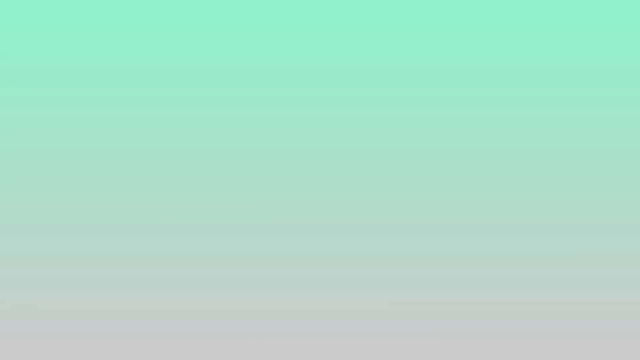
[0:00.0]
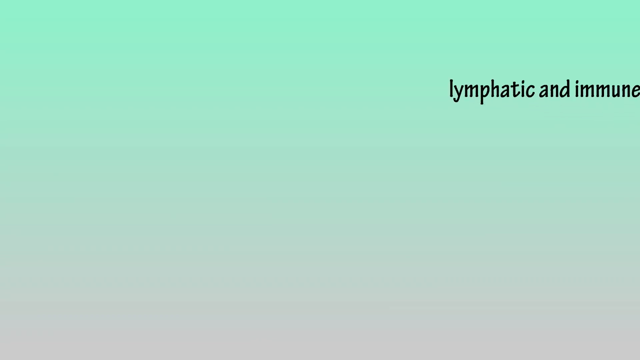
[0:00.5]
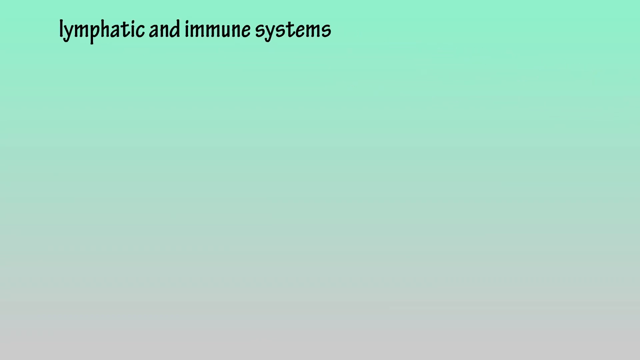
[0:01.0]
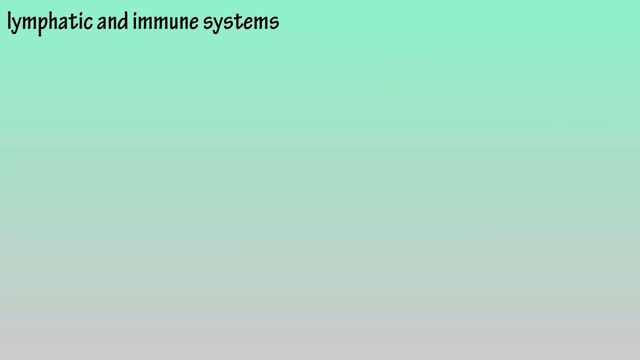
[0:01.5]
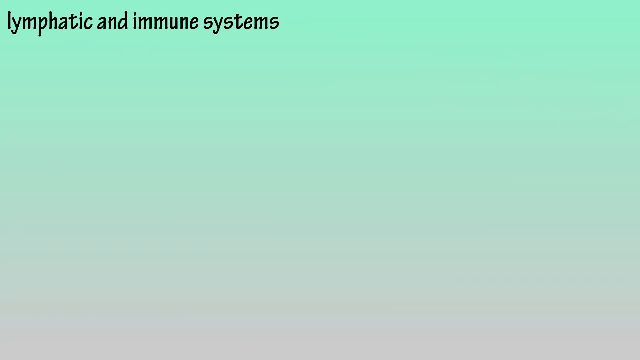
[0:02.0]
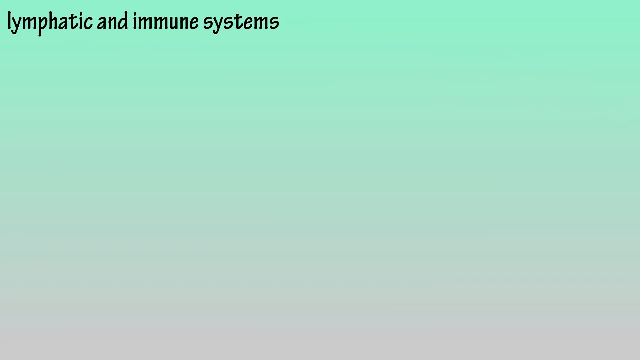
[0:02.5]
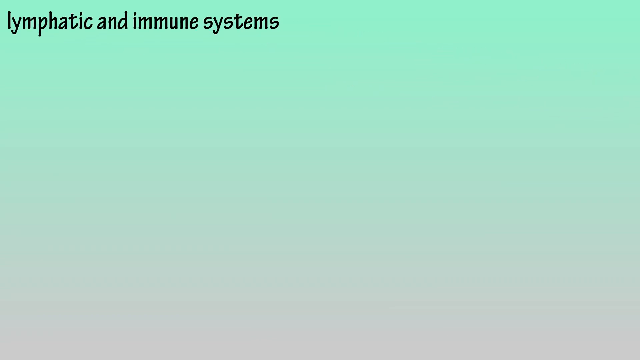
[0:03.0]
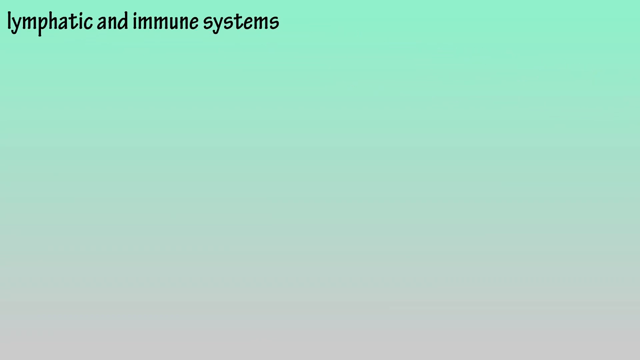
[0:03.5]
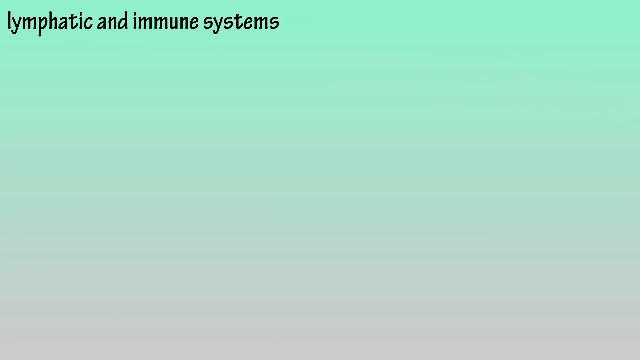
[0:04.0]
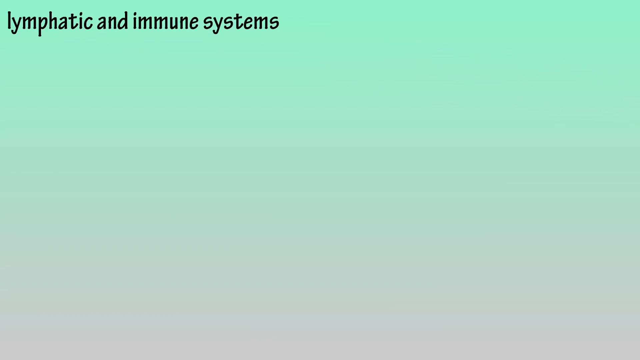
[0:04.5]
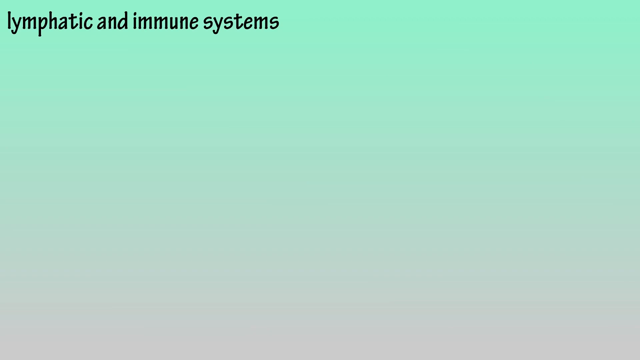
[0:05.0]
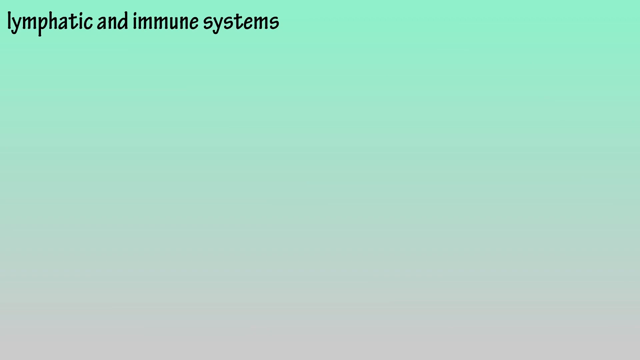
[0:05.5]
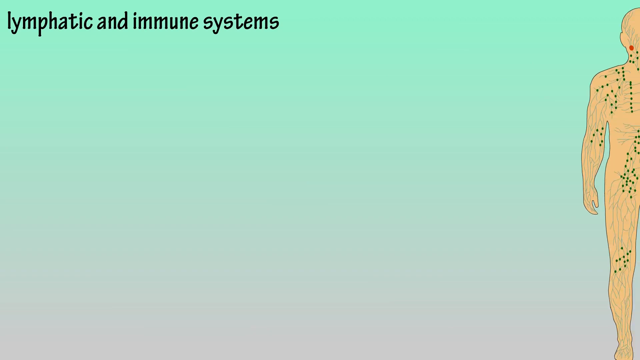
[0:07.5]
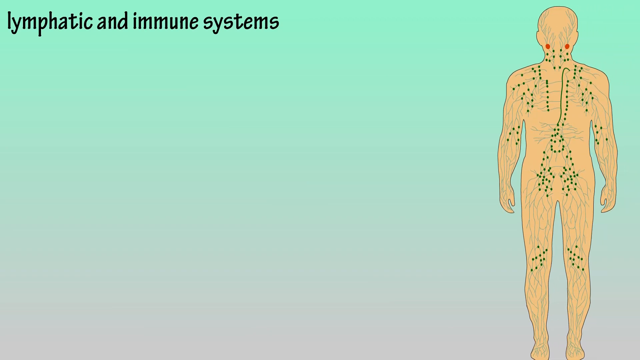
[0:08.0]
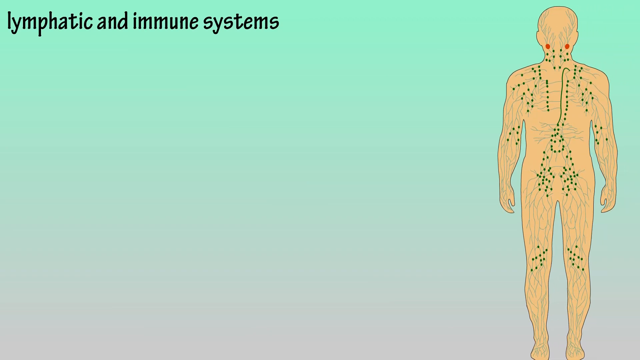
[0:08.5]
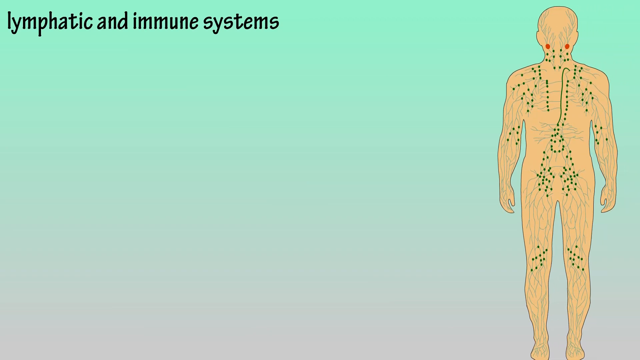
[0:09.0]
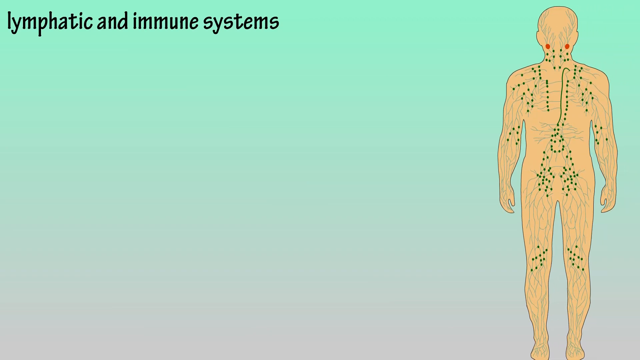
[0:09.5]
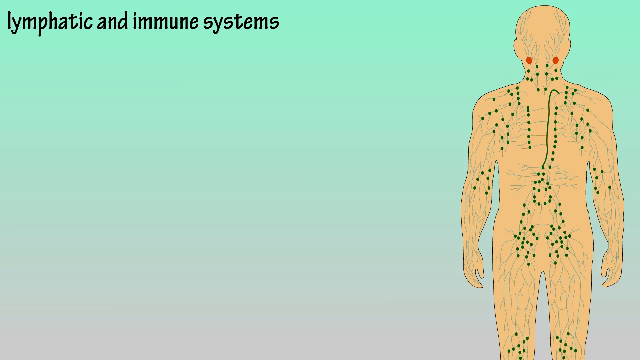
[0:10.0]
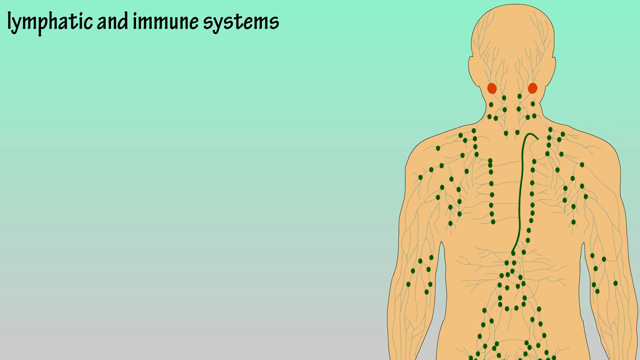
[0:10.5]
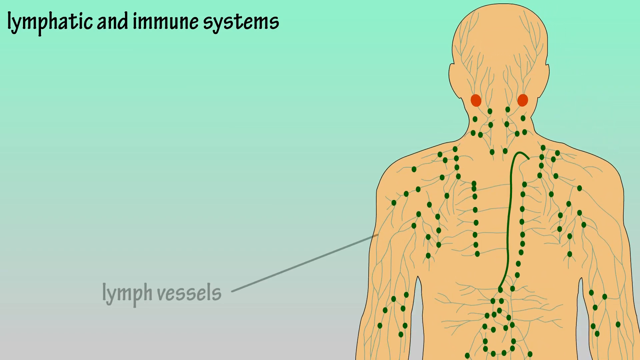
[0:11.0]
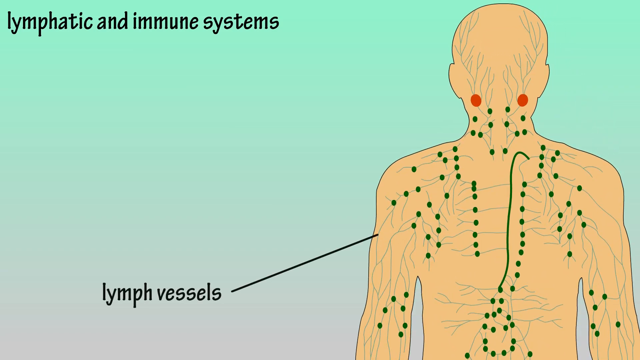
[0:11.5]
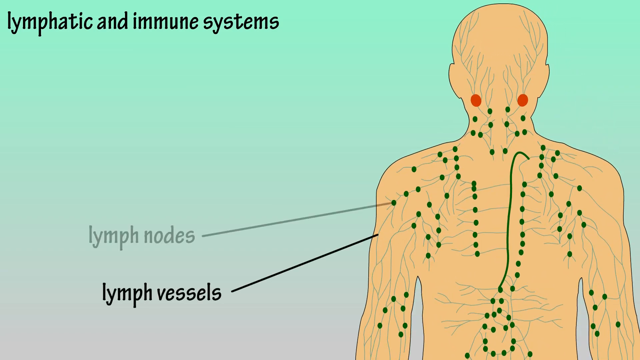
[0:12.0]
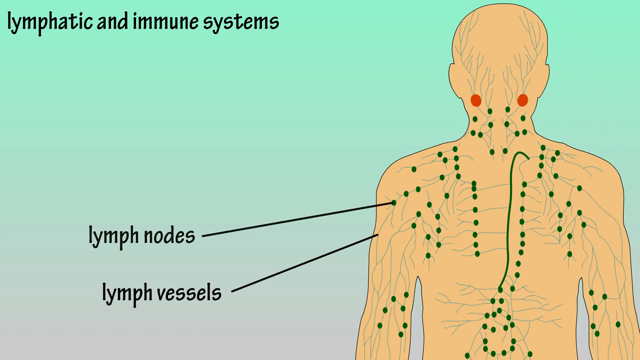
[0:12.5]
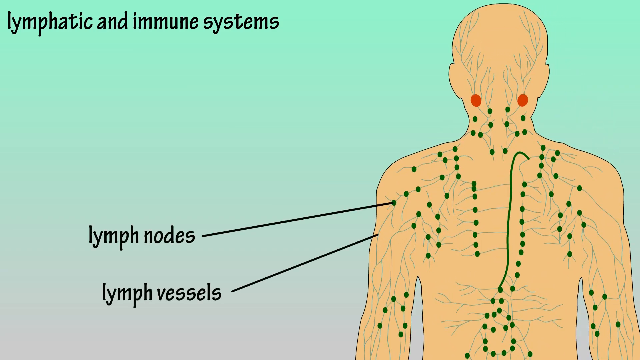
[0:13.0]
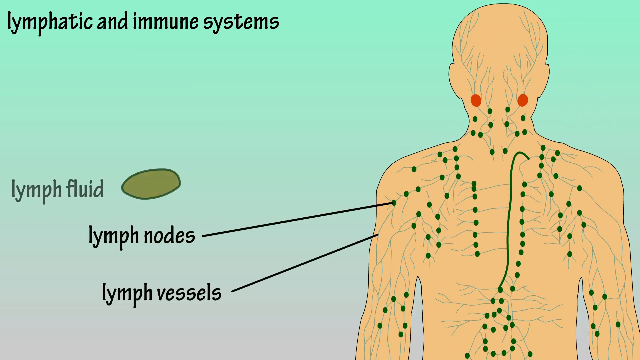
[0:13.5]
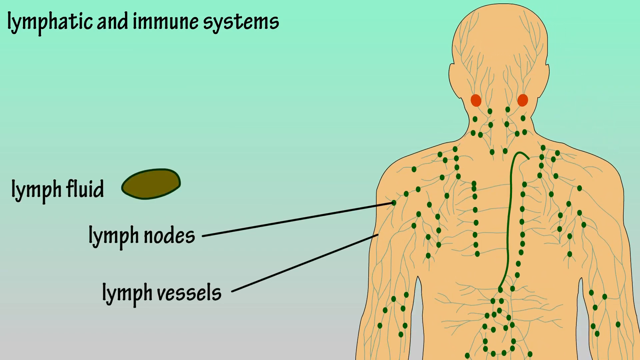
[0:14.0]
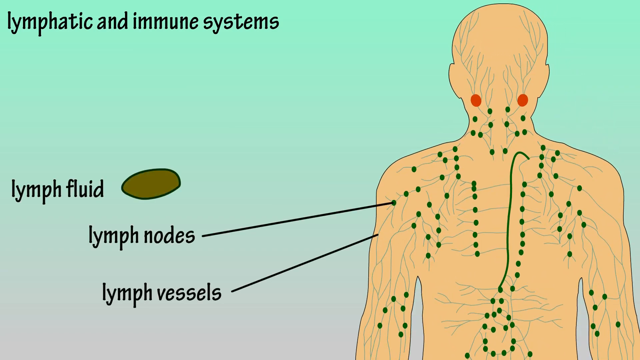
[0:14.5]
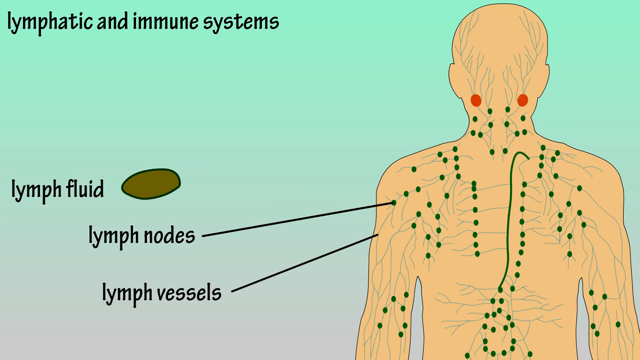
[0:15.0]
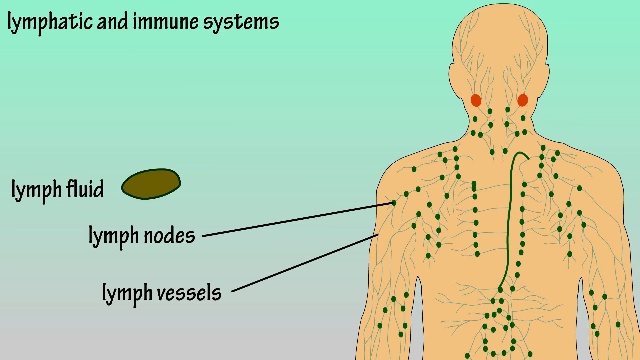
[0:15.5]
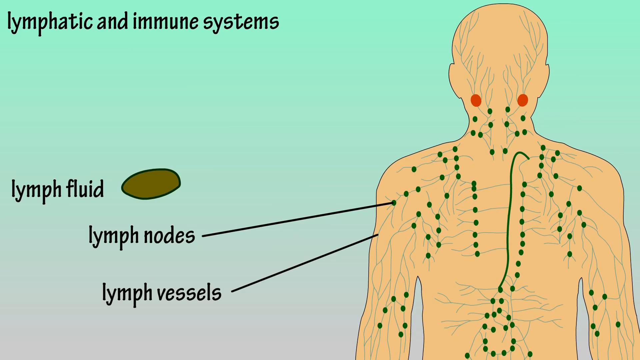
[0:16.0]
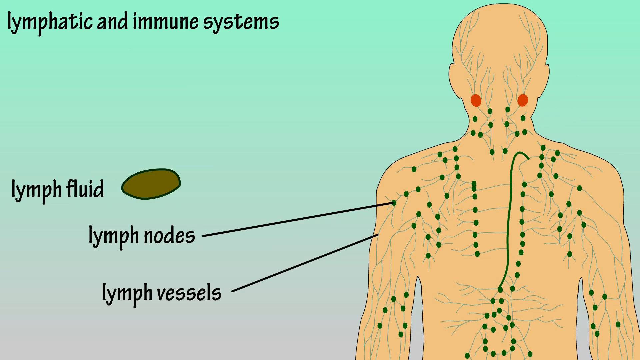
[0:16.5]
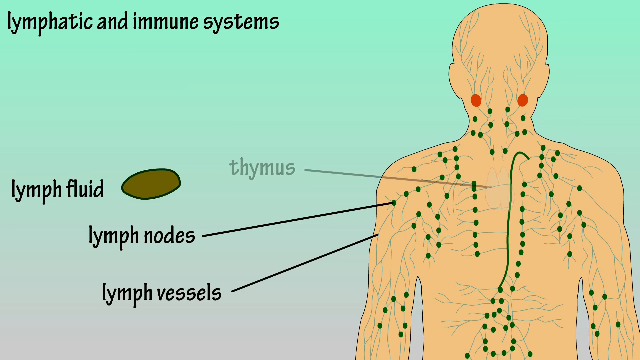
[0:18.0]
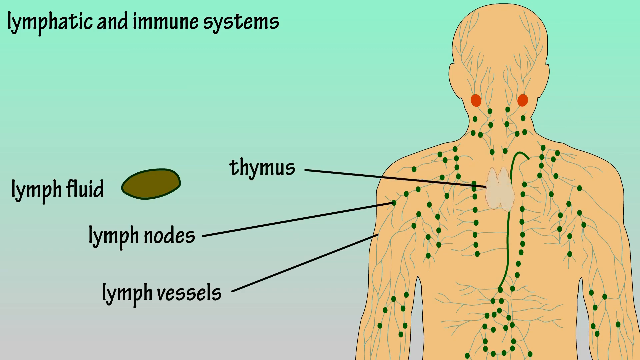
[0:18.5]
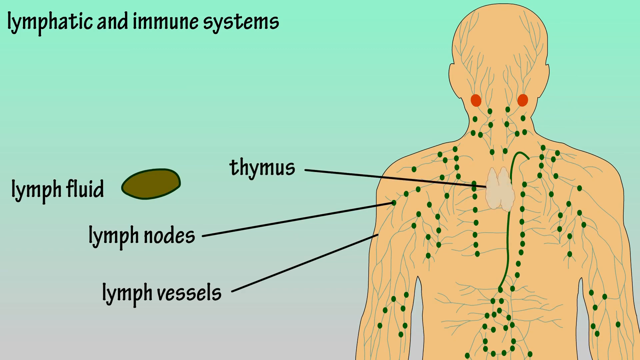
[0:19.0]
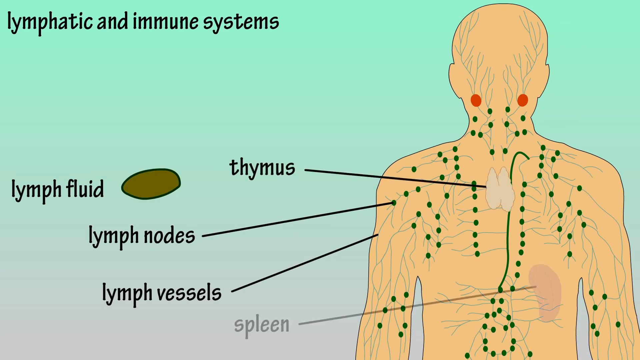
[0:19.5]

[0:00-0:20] The text "lymphatic and immune systems" flows from the right side to the top left corner. A human body then flows in from the right side of the screen and stays on the right side, marked with dots: many green dots, one green line, and two red dots near the ears. The camera zooms in on the body. A line leads toward the person's left hand with the text "lymph vessels". Above it, "lymph nodes" is connected to a green dot. There is also "lymph fluid", and next to it a brown, green oval. Something that looks kind of like a shell appears in the middle of the person near the throat, with a line drawn to it labeled "thymus".